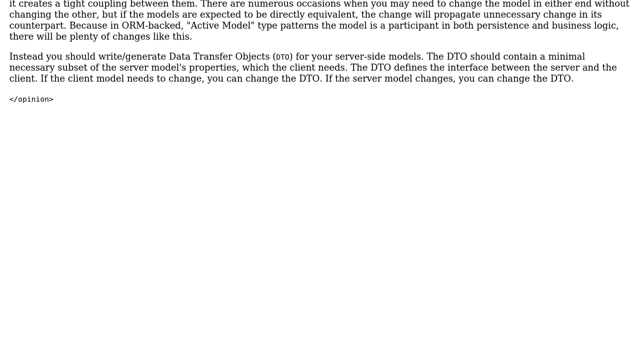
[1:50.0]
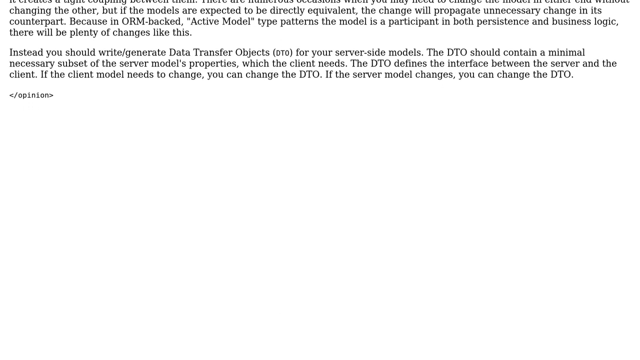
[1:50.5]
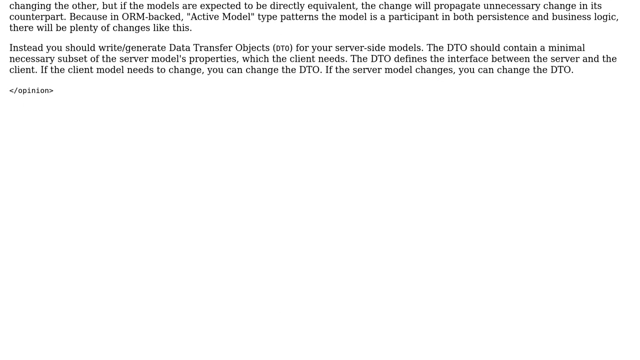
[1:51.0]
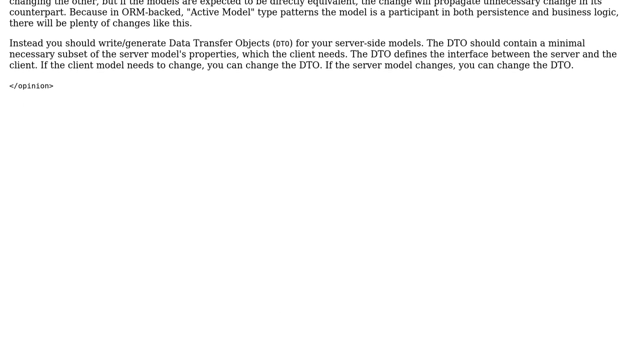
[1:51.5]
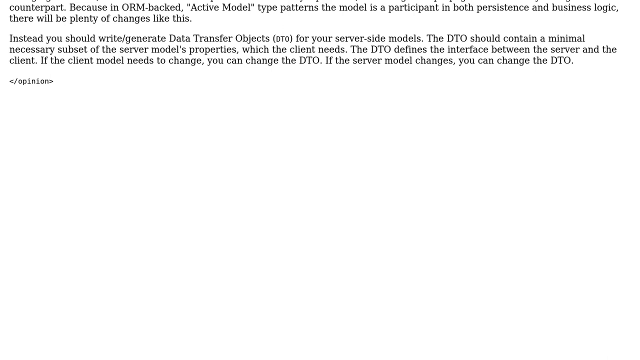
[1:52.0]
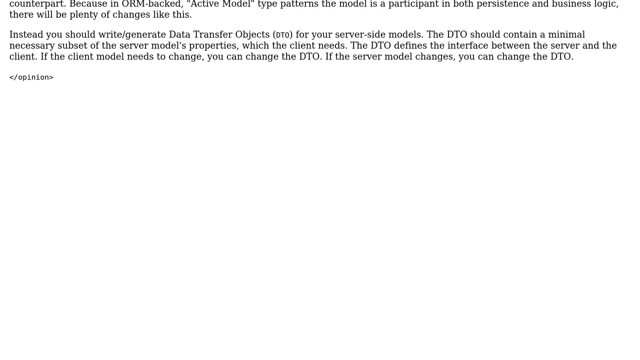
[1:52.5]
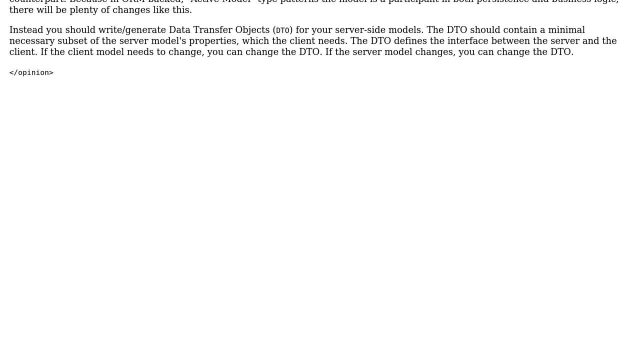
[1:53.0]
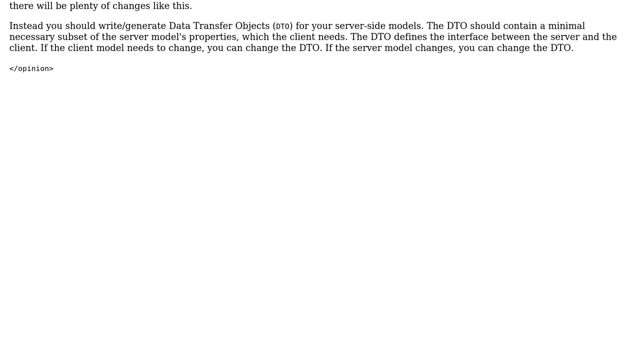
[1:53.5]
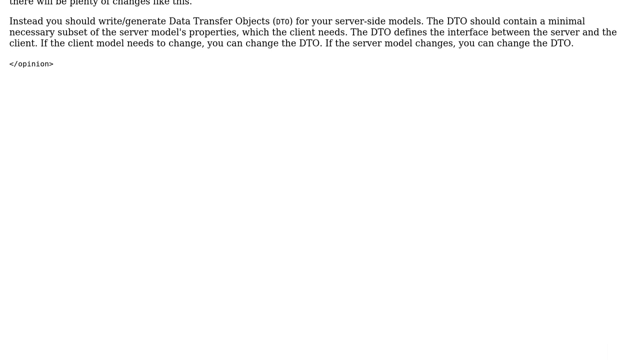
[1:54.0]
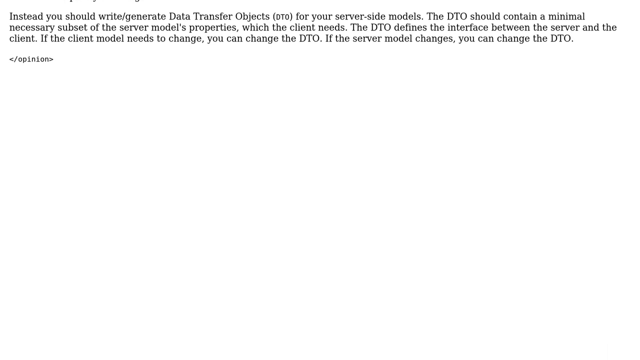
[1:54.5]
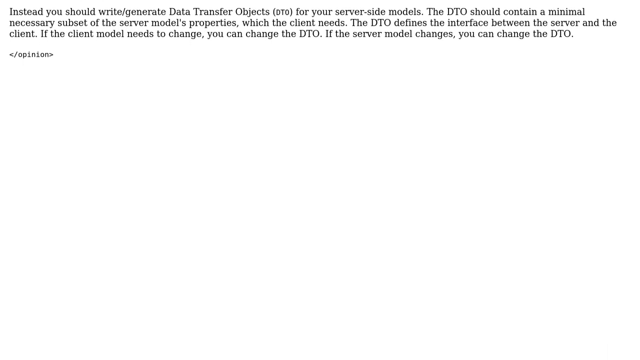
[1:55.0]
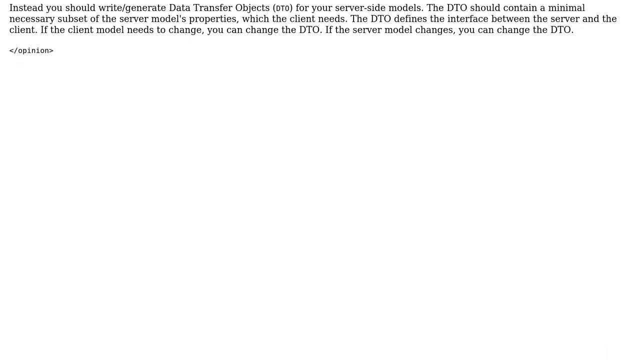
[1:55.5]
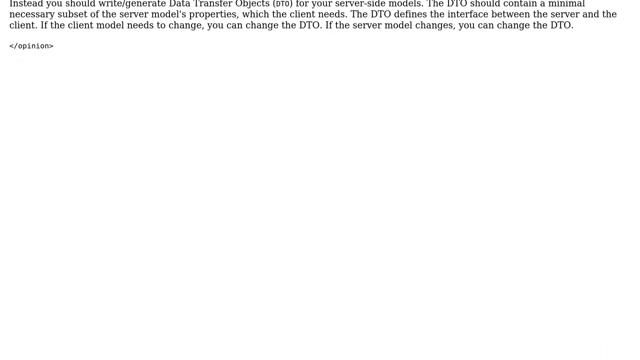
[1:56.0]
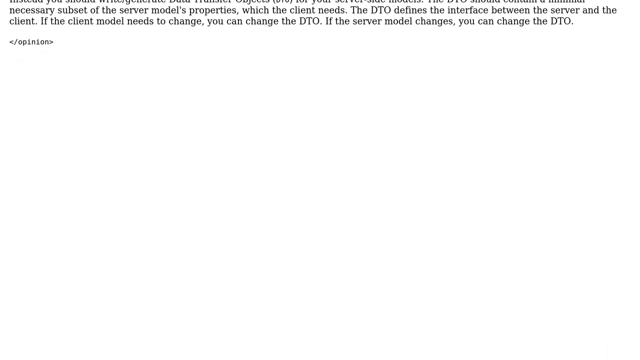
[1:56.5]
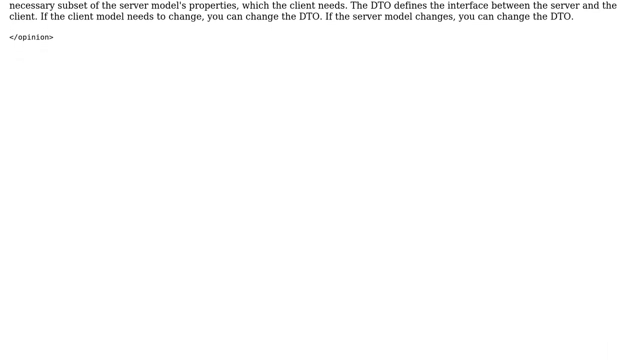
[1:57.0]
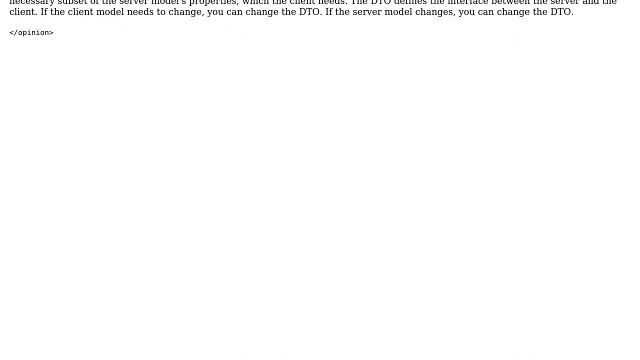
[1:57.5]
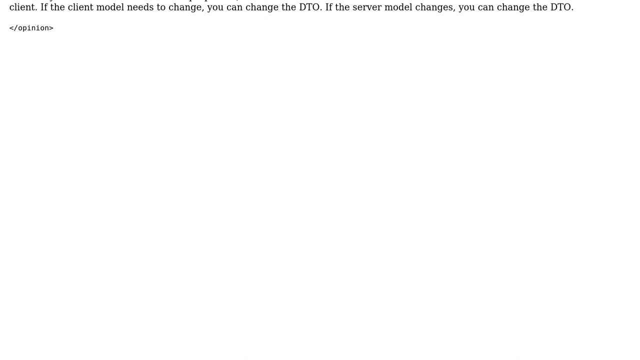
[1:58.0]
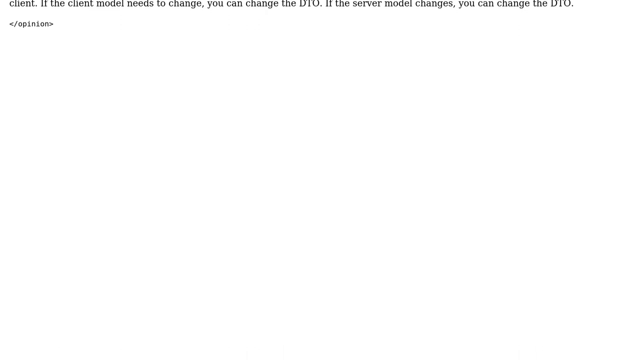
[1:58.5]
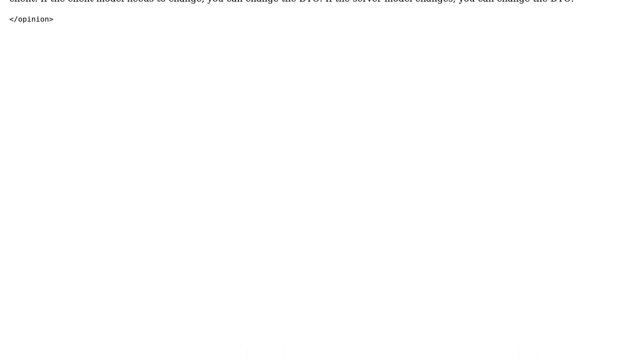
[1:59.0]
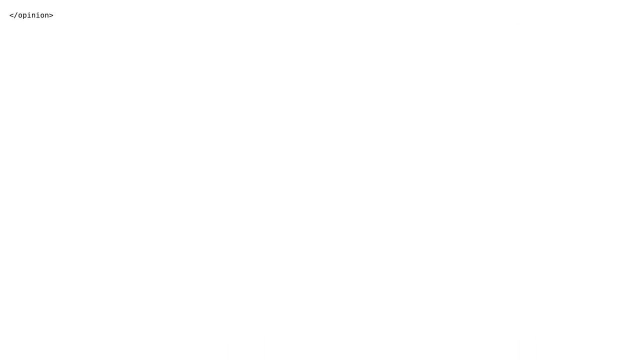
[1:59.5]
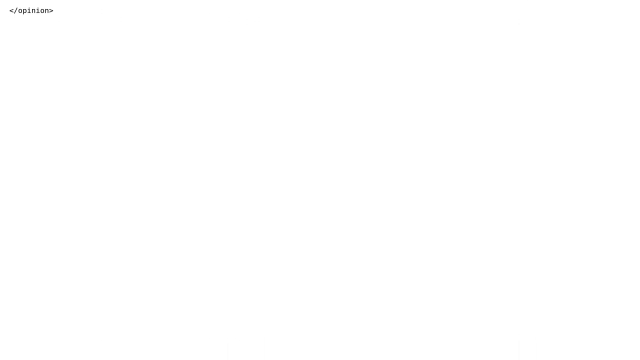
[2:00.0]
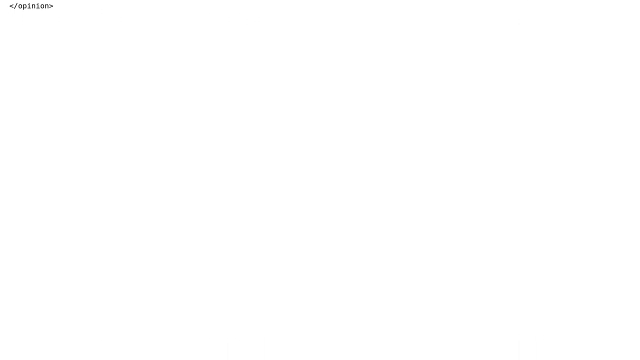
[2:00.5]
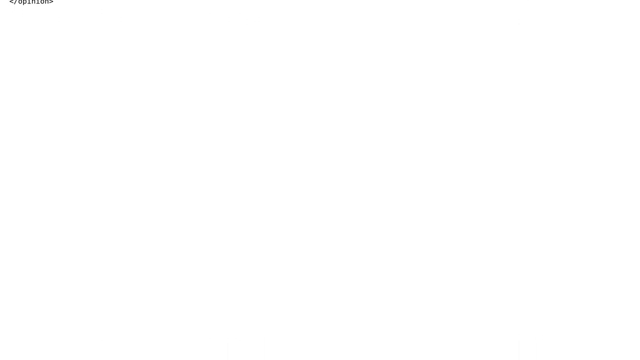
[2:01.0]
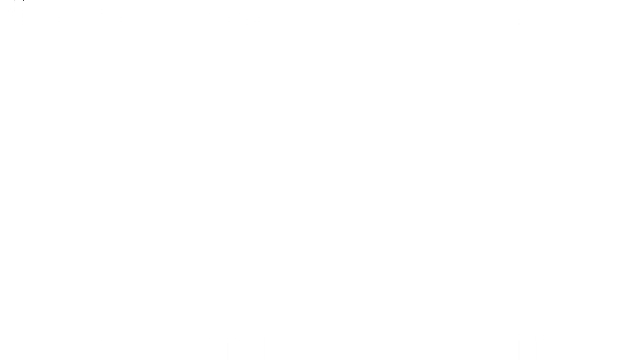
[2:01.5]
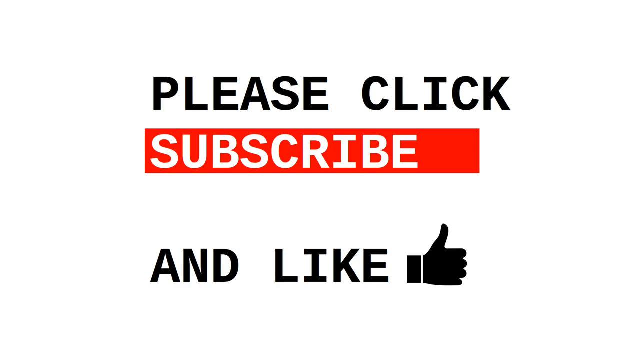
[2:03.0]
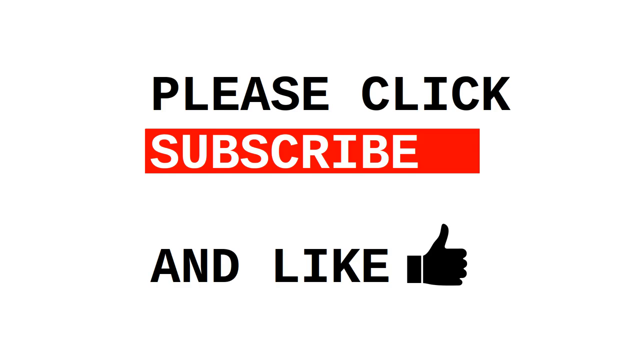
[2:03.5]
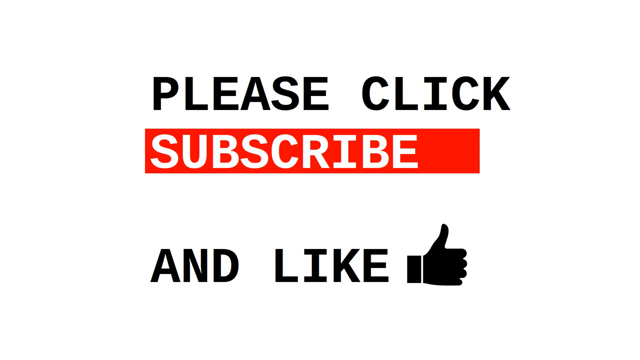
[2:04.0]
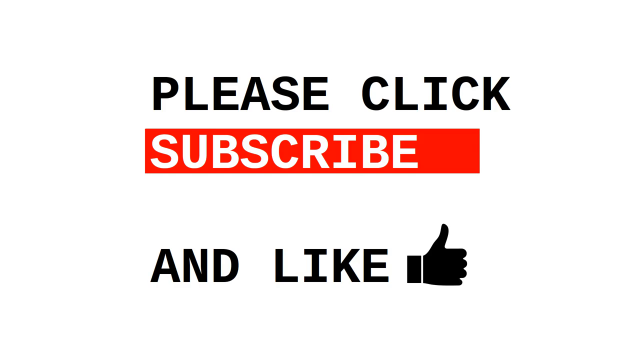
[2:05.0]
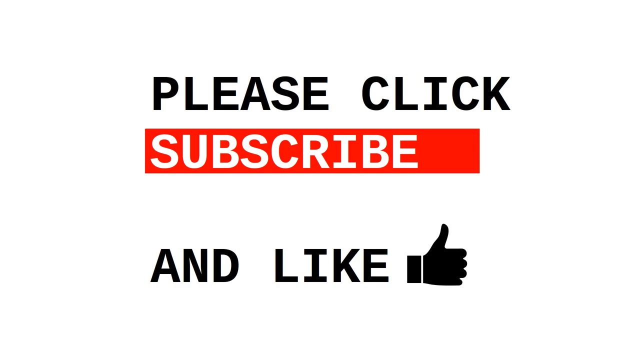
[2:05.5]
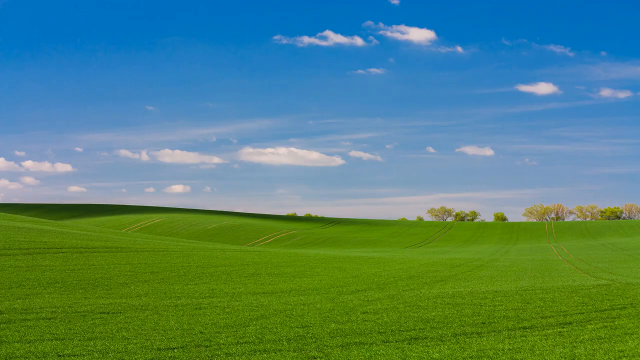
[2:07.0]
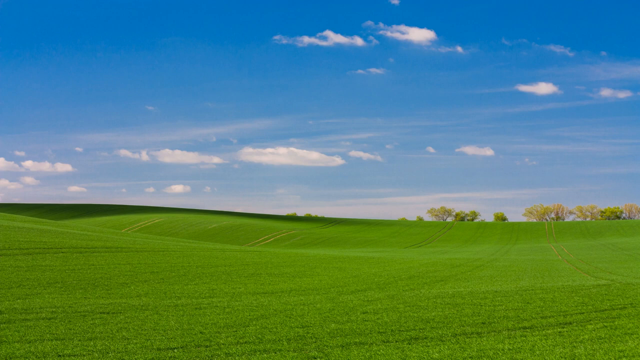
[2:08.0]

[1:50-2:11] The black text continues moving upward until it is entirely off the screen, leaving the whole page white. Large captions then appear in the middle reading "please click, subscribe, and like". The words "please click" and "like" are in black font, while "subscribe" is in white font on a thin red rectangle background, and a thumbs-up symbol is to the right of "like". The scene then completely changes to the famous Windows XP wallpaper called Bliss: a green field with blue skies above, some clouds moving through the sky, and some trees in the distance on the horizon on the right side.